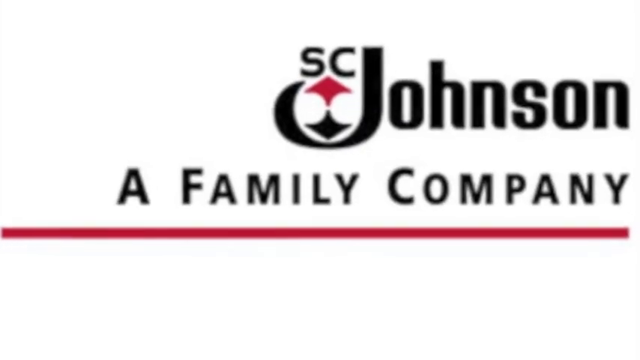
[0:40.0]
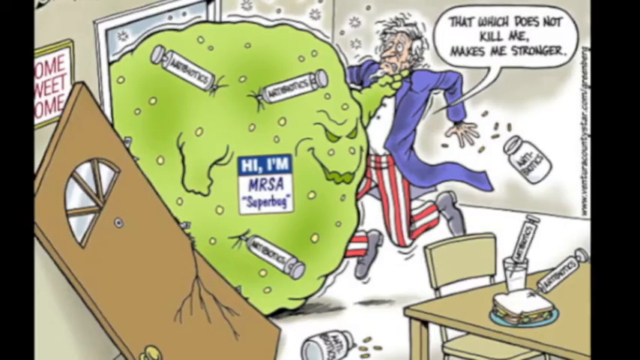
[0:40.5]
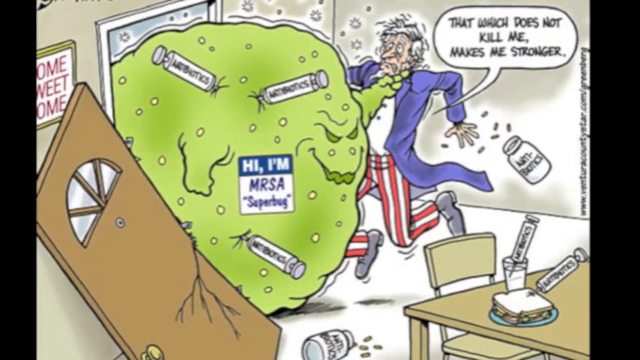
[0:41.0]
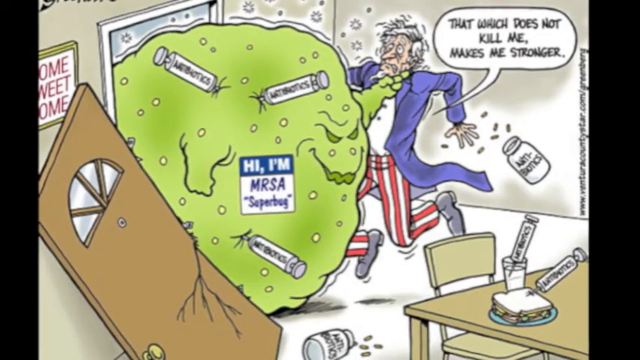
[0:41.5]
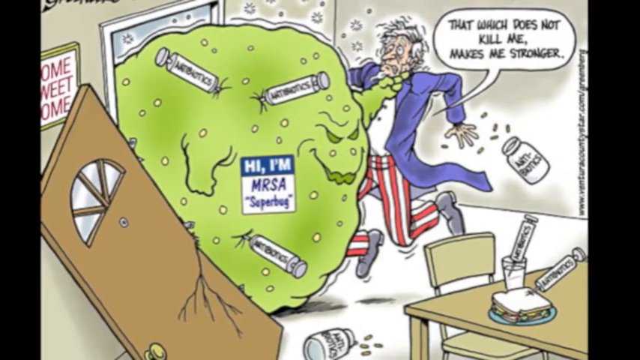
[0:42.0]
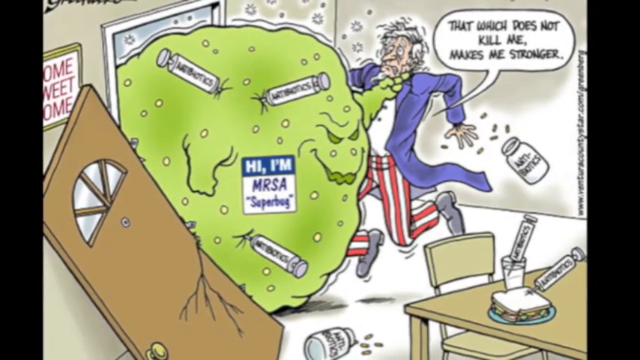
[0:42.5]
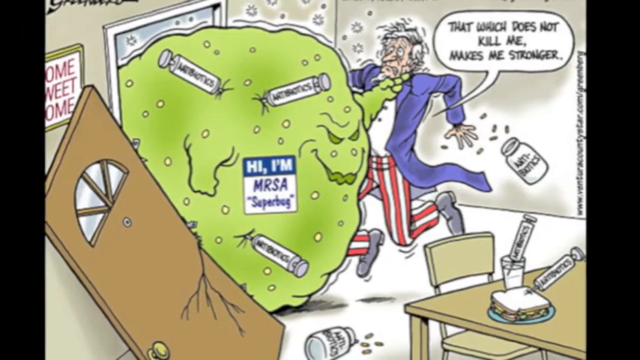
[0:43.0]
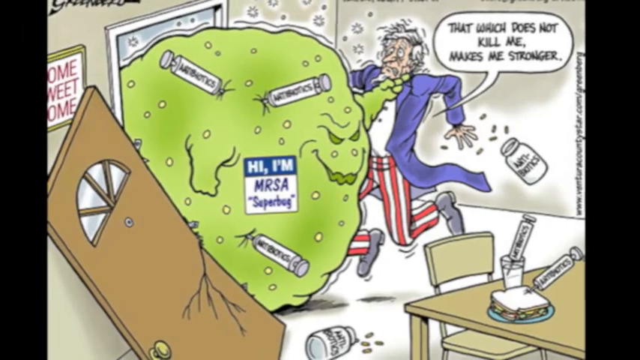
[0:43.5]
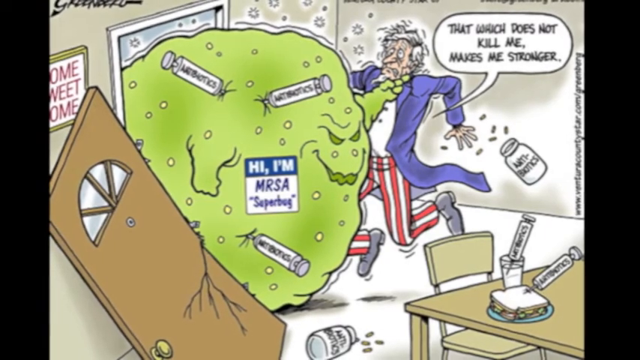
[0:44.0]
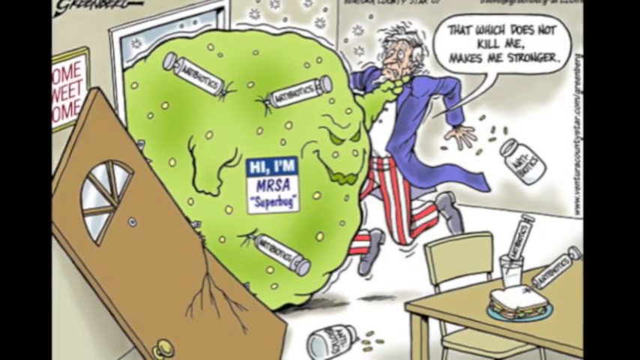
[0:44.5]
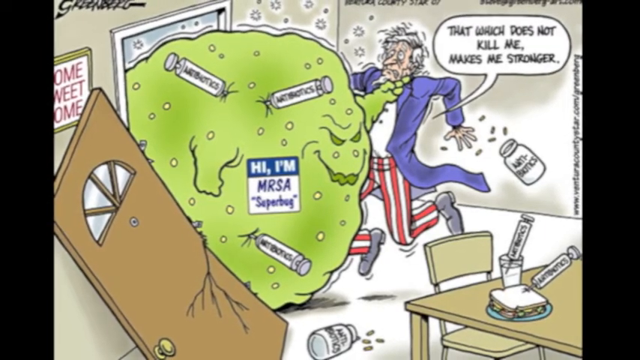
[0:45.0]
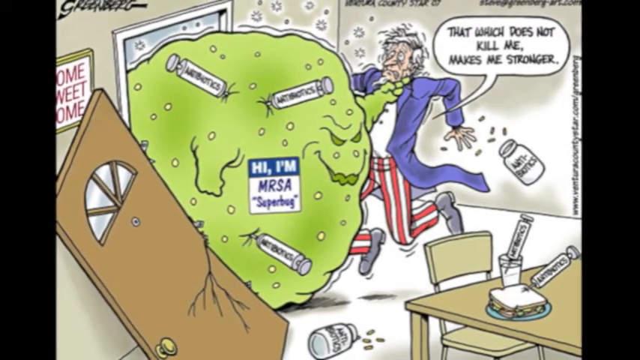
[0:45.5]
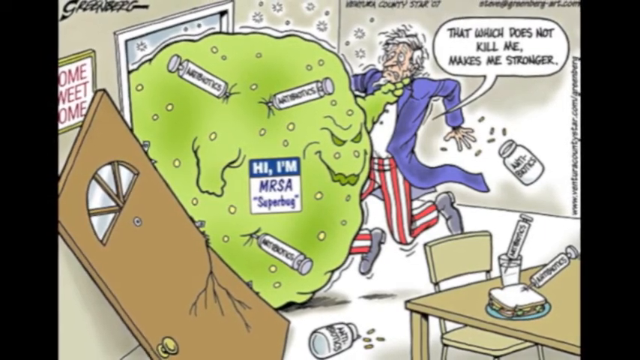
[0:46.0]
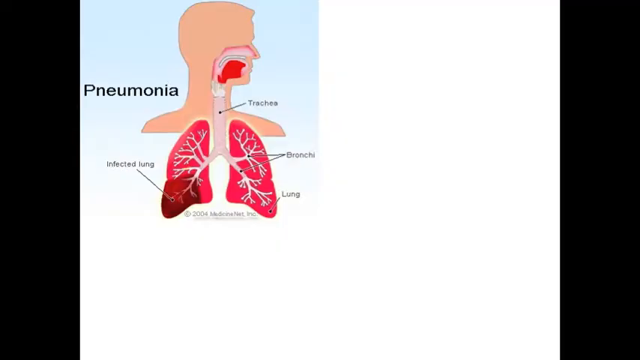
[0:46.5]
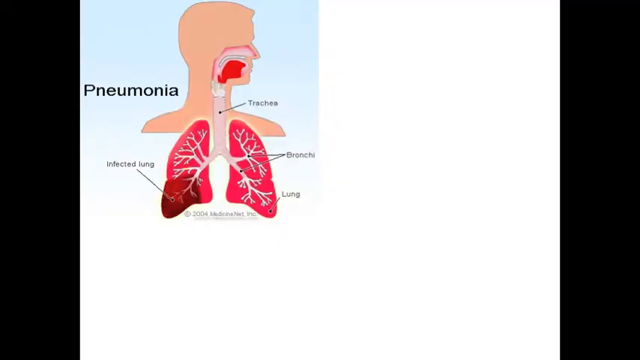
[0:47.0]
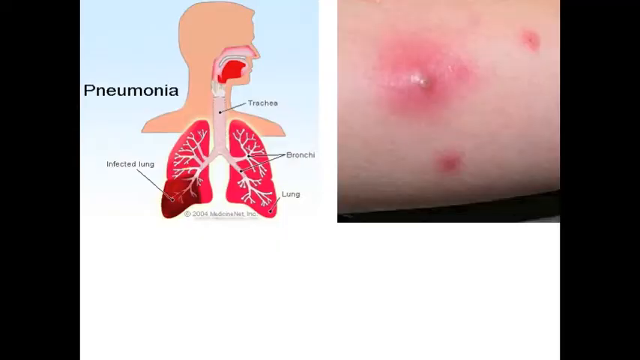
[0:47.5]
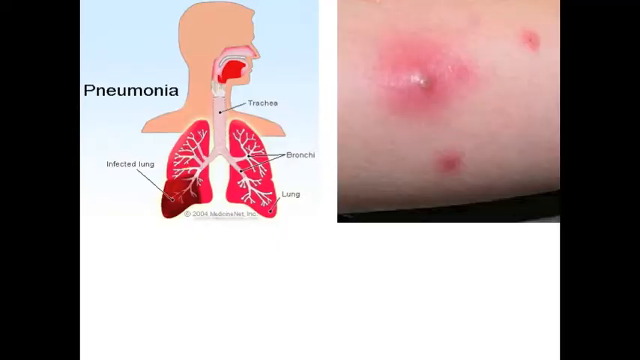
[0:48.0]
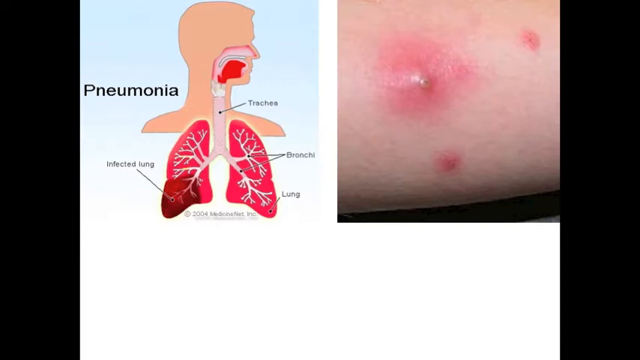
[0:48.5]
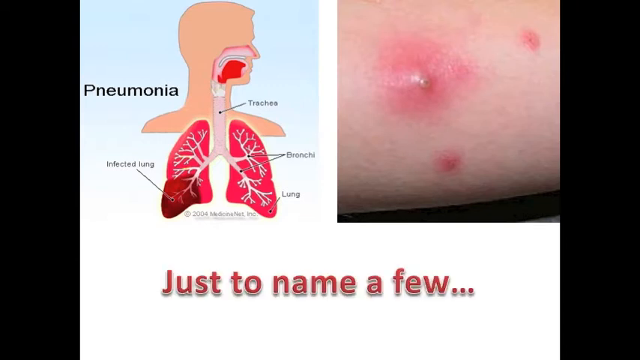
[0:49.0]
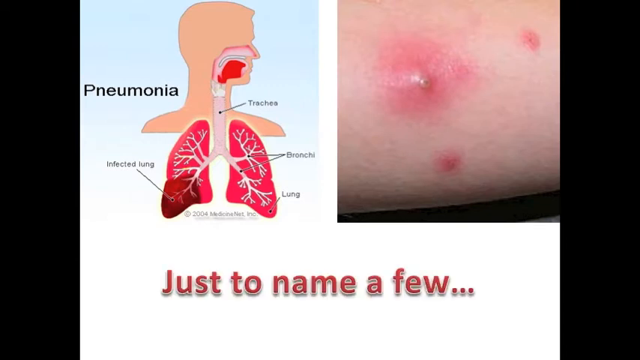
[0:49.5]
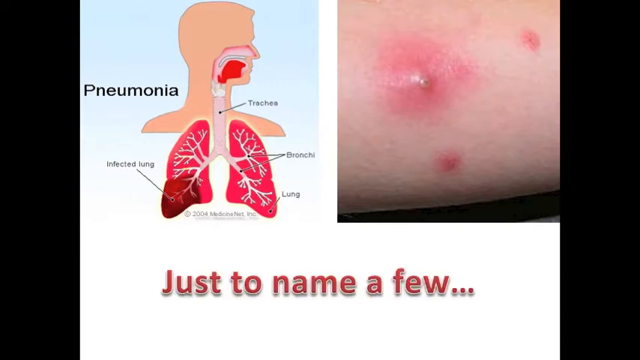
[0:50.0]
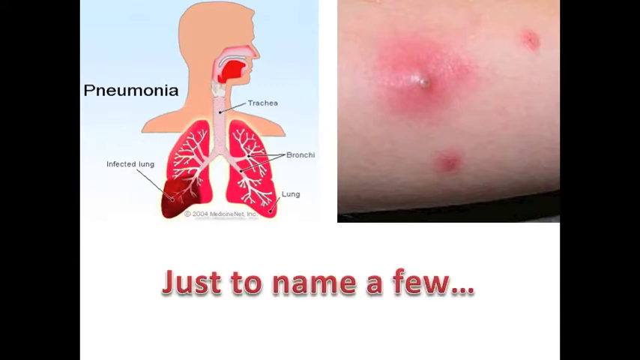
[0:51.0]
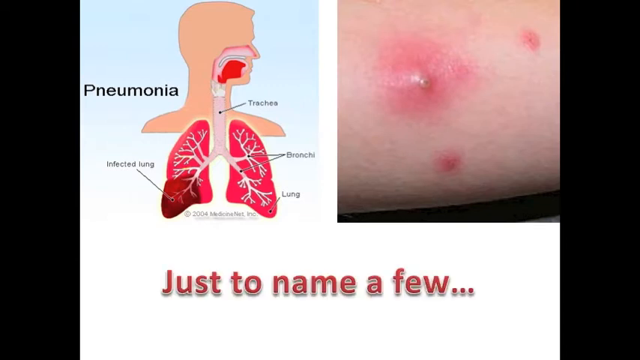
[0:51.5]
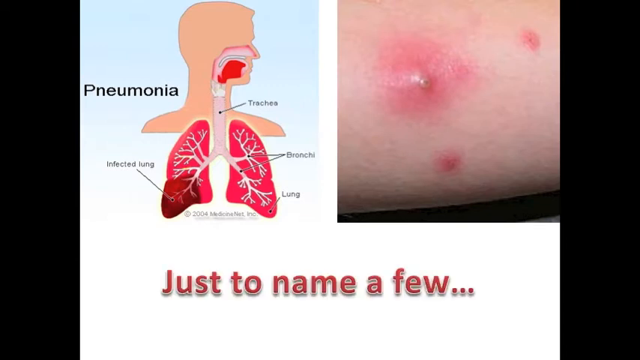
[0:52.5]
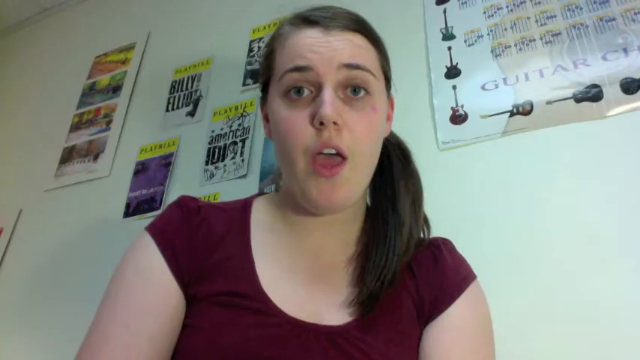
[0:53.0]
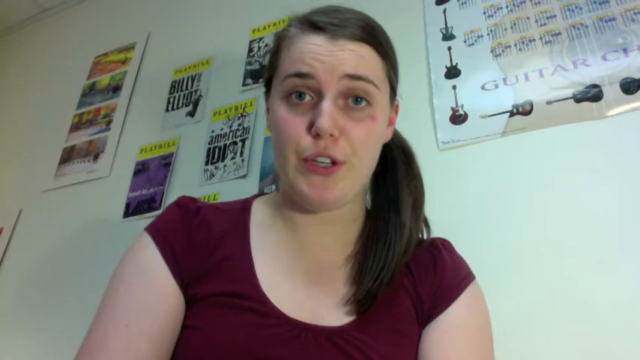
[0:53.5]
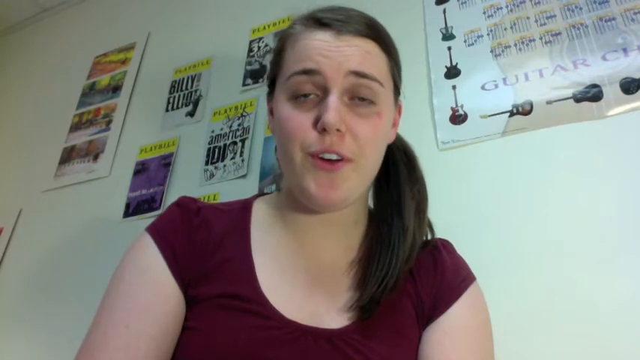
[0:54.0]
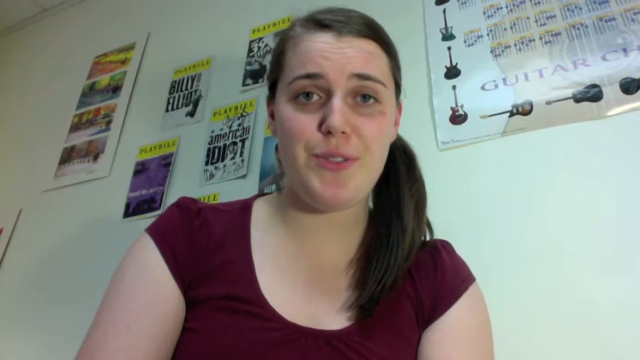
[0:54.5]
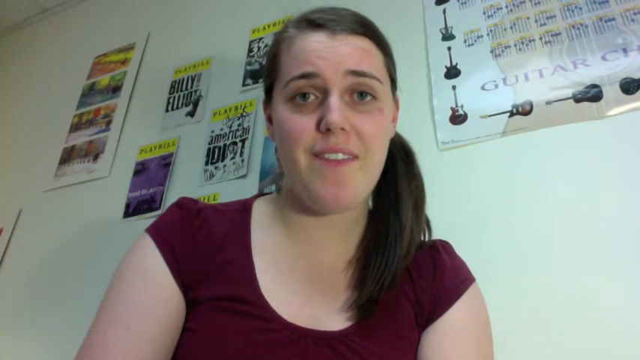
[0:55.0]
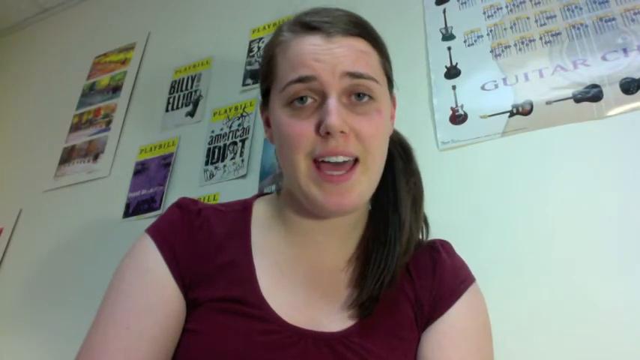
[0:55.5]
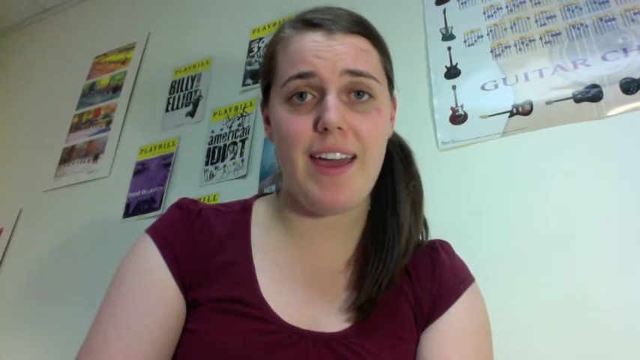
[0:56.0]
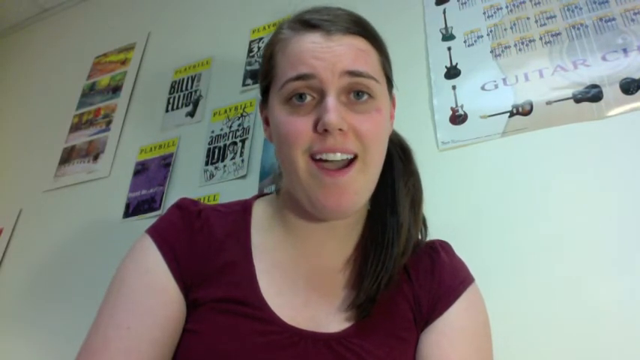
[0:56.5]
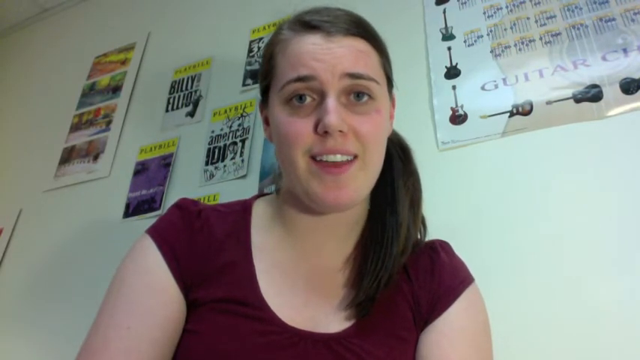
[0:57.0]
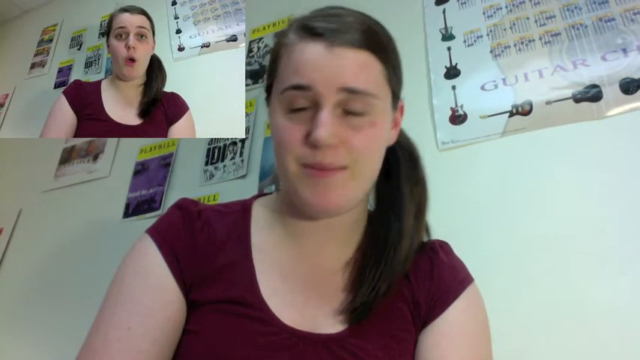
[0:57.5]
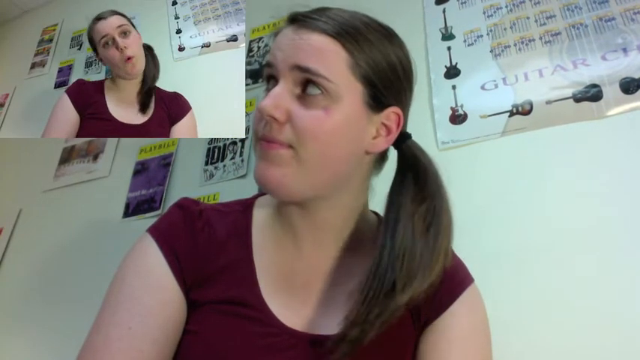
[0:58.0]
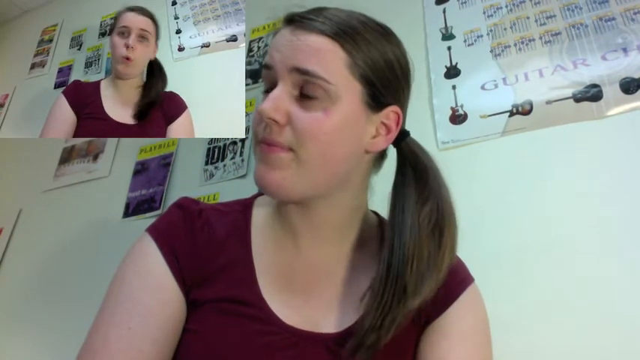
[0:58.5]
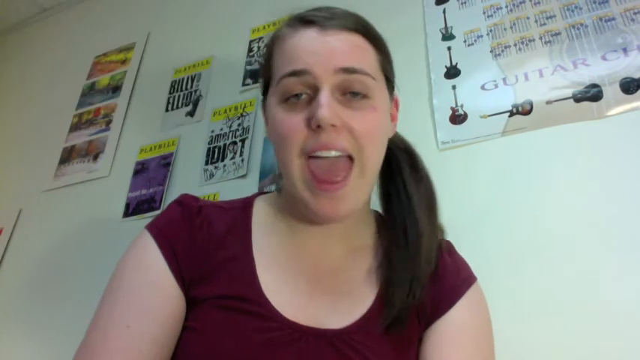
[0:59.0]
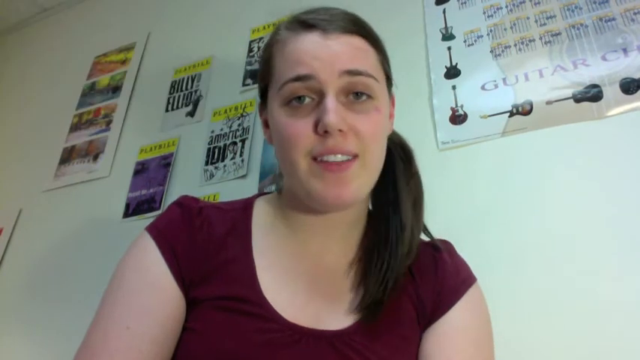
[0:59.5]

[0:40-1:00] The text "SC Johnson a family company" appears in red and black with a red line underneath. A virus with a name on it says "hi I'm MRSA", with something like a little sticker covering what is underneath. A page with what look like little pimples says "just name a few", and a poster of pneumonia shows a person and their body parts. The girl in the maroon top talks and looks up toward the corner at herself; she has what looks like a red mark on her right cheek, above her eye. A patriotic old man in a blue long shirt, a white top and what looked like pants is held by the throat in the air by the virus, with a bunch of objects spilled onto the floor.